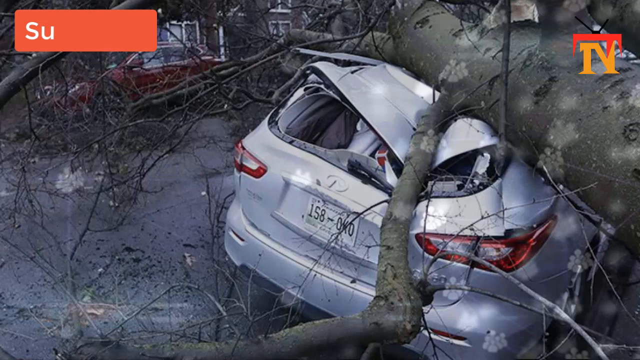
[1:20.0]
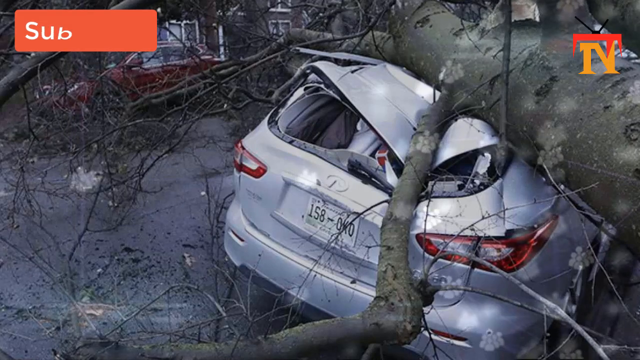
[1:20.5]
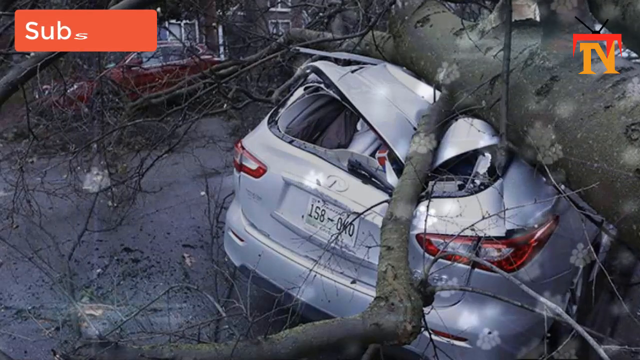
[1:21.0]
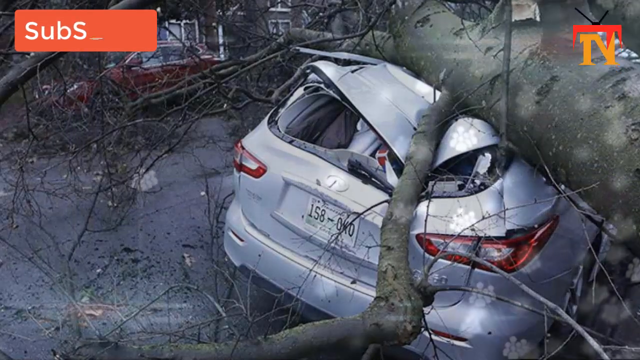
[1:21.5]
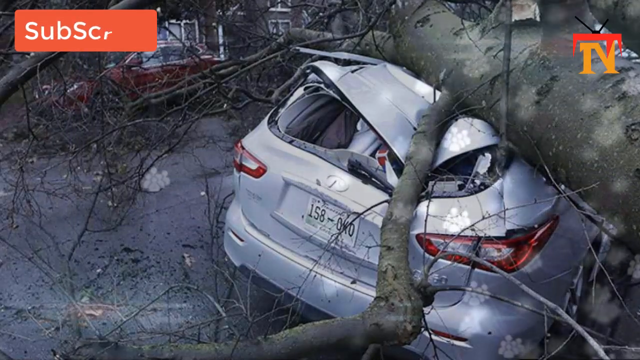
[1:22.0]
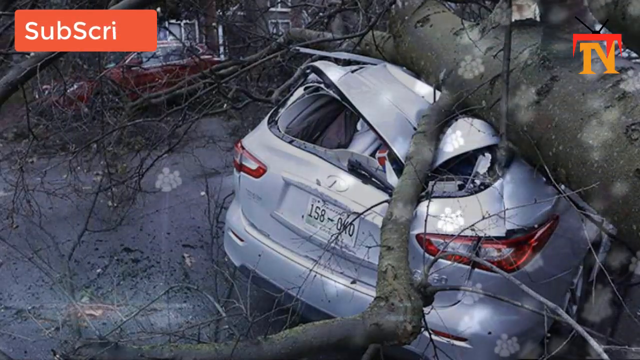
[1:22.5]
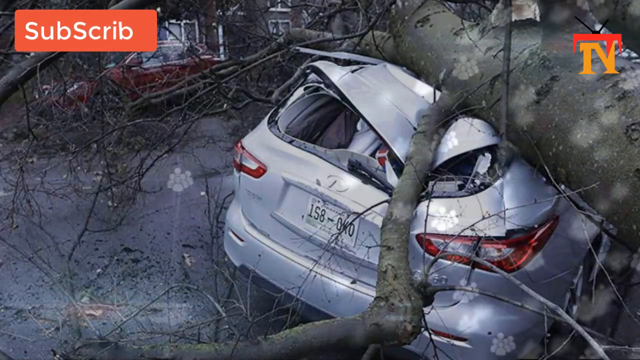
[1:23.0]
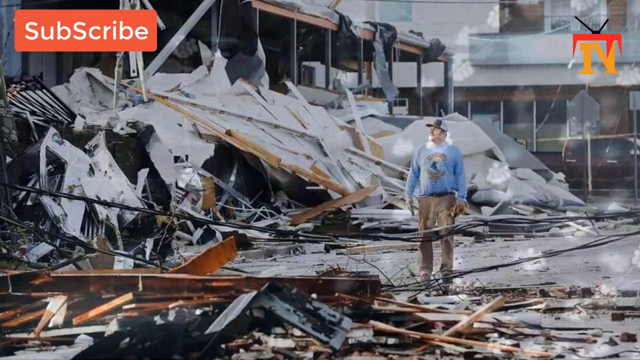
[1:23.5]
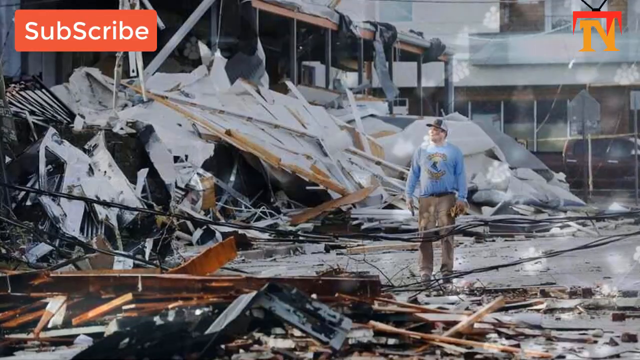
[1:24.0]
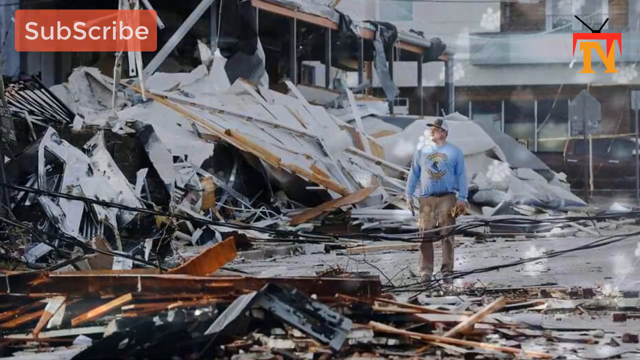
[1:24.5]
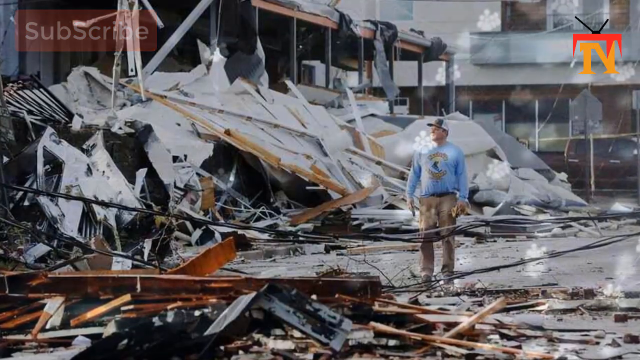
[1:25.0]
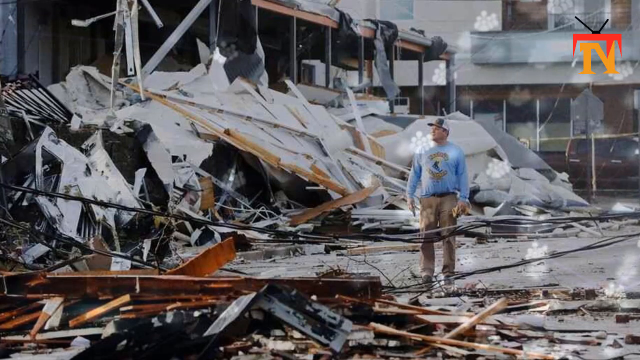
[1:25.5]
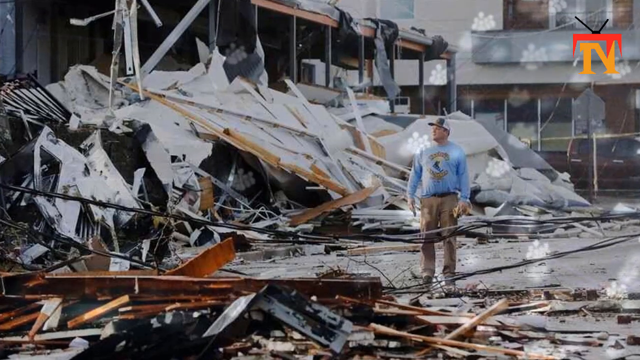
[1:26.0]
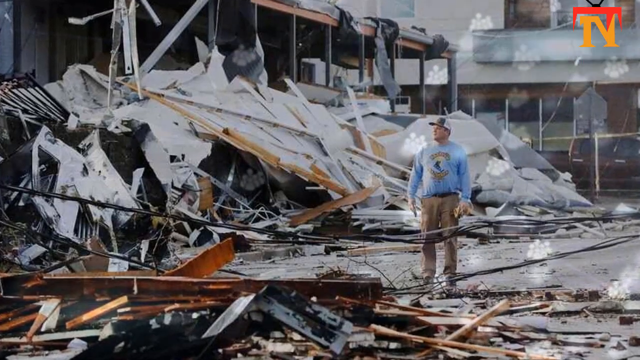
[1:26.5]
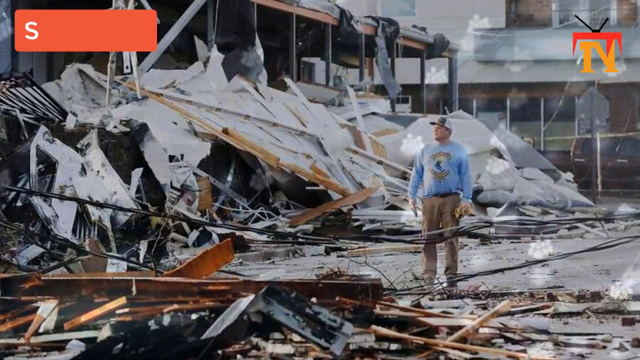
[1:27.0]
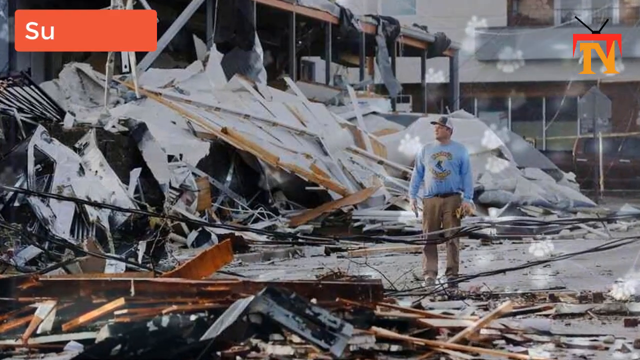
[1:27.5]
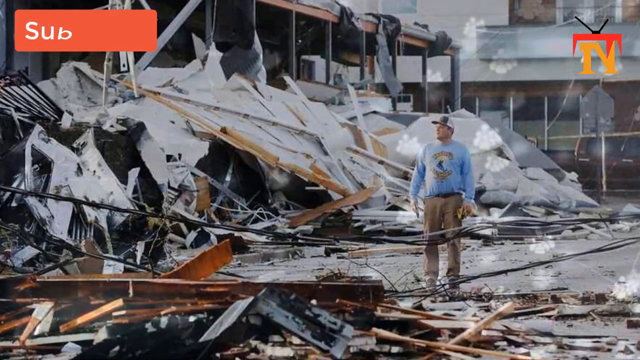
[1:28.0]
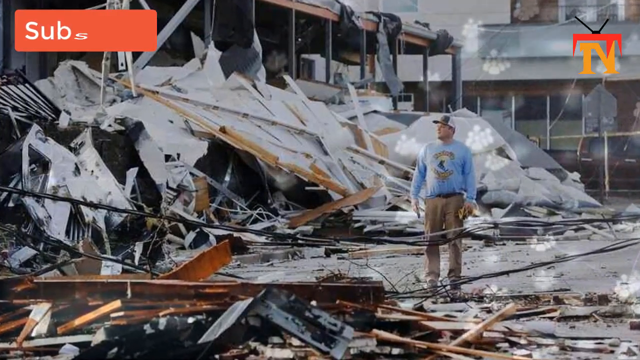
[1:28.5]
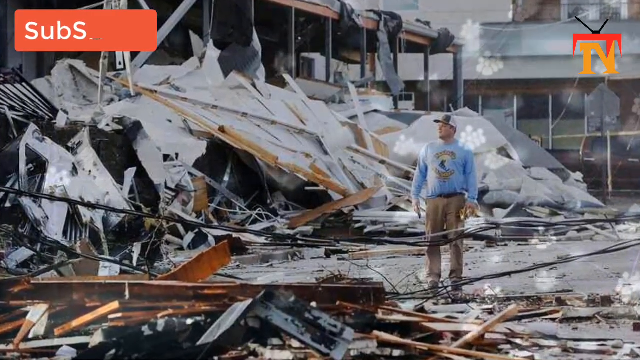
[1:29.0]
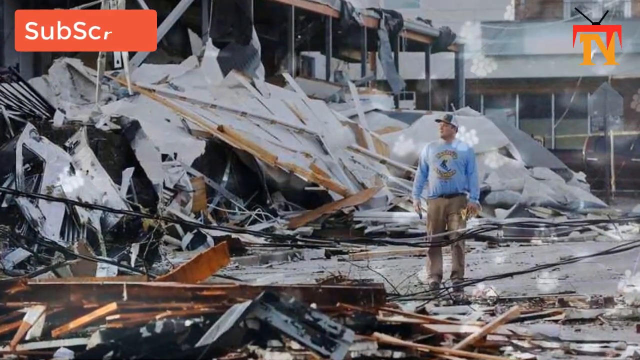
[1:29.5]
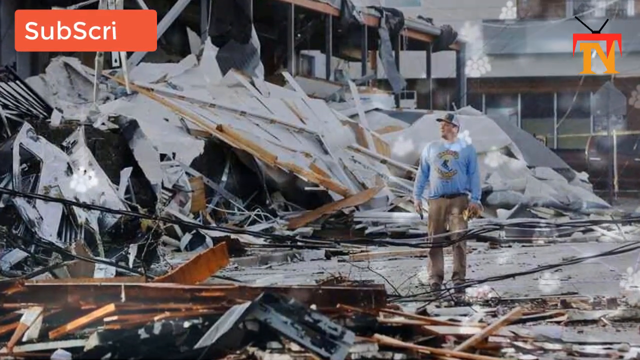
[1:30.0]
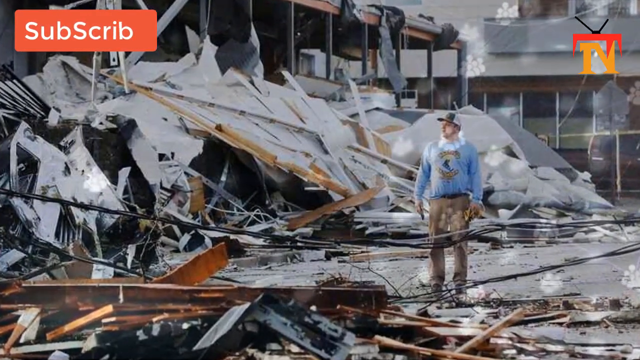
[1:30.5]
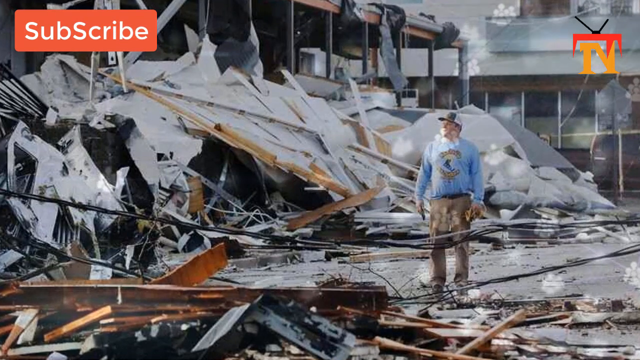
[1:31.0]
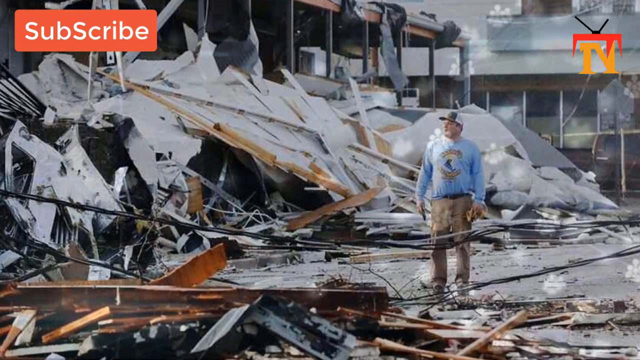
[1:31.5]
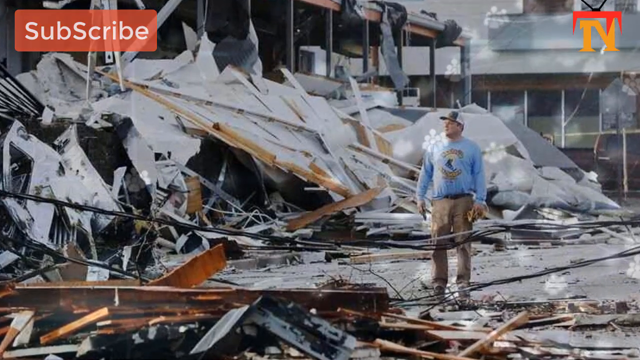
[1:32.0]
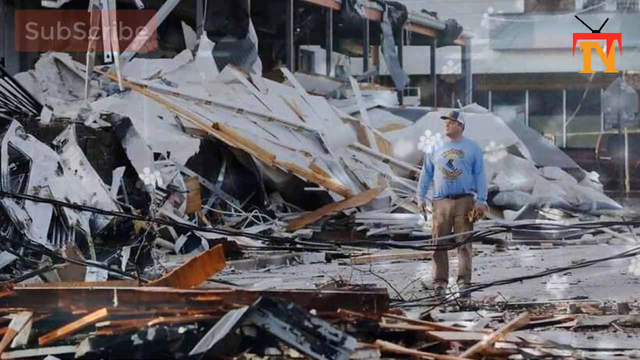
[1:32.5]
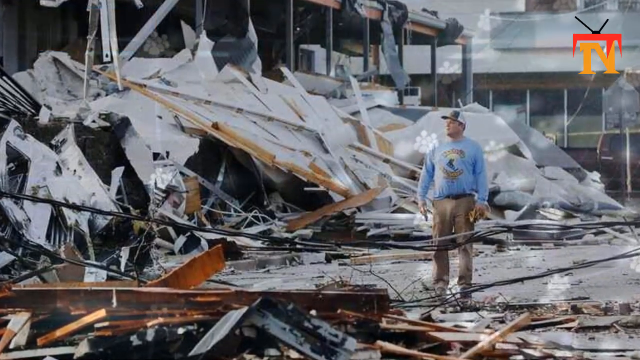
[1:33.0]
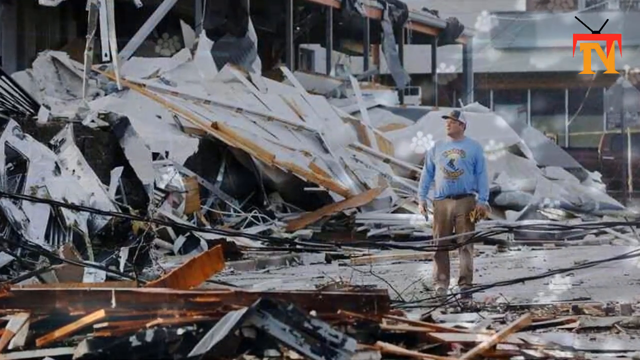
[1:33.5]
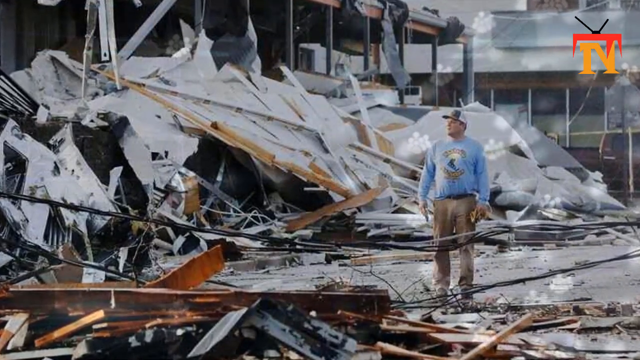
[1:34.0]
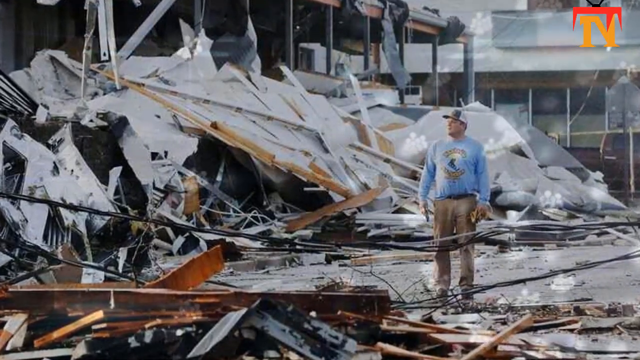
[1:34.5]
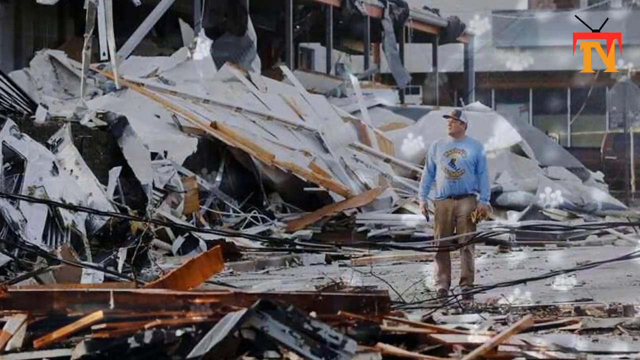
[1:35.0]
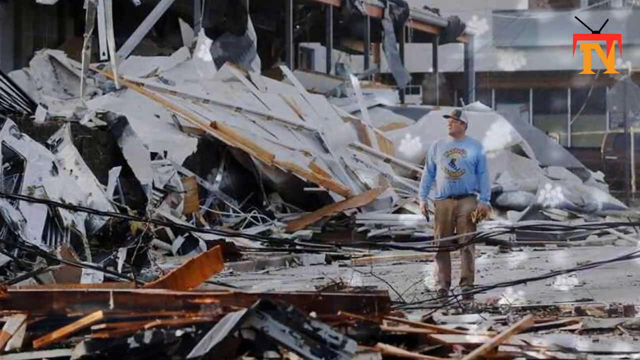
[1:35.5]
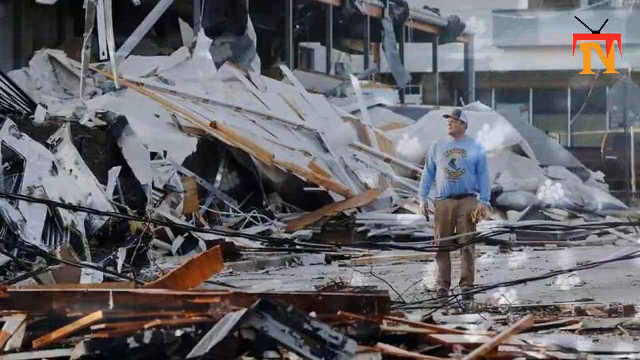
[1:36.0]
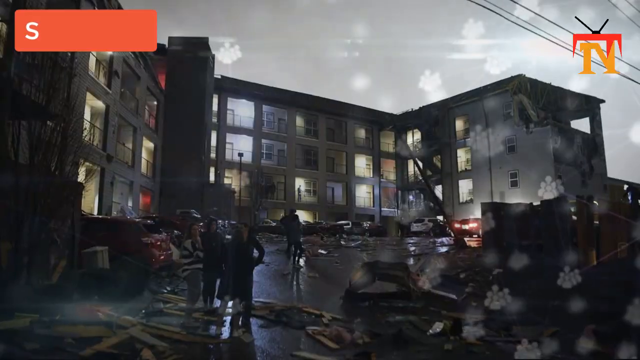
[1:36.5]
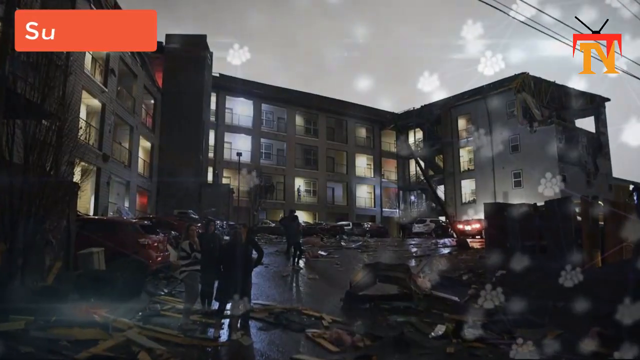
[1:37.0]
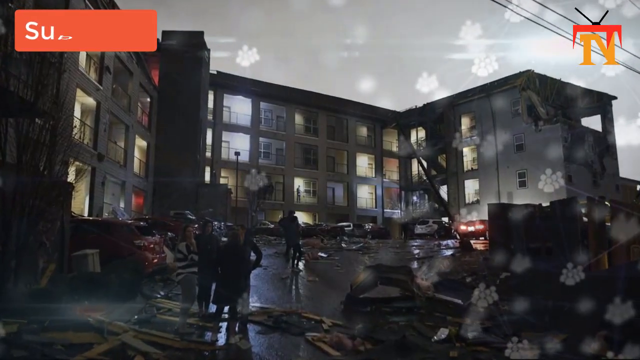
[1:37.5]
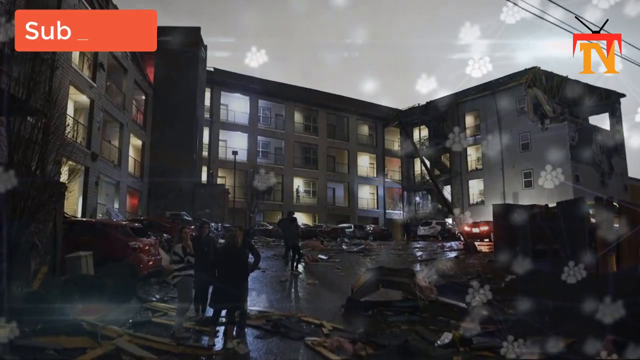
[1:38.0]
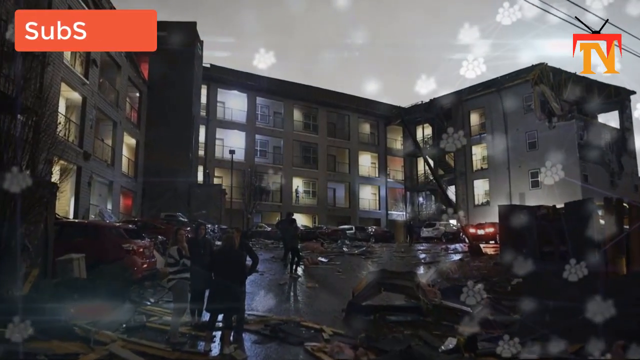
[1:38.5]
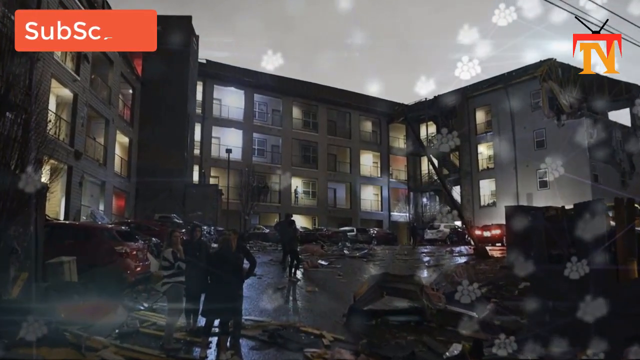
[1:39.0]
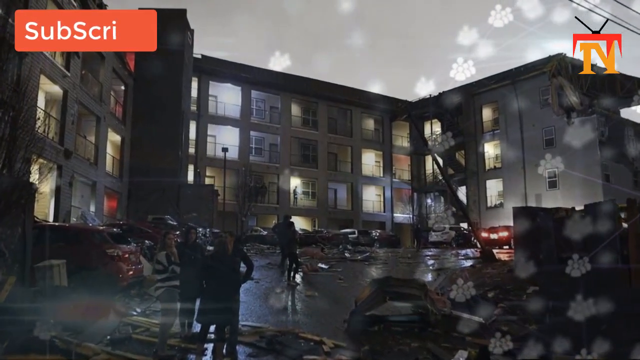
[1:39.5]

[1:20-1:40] A very zoomed-in image shows a large tree that has smashed completely over the top of a silver sedan, breaking the back windows and bending the middle of the roof completely inward. The car is slanted slightly toward the right from the crushing weight of the tree. The scene cuts to a man in a long, loose sweatshirt standing in the center of wreckage. He looks toward the left side of the screen, off into the distance, as if observing the wreckage surrounding him. Behind him are multiple buildings whose facades have been wrecked and lie on the street in giant piles of wreckage. The image slowly zooms in on the destruction. The scene changes to a nighttime view of an apartment building complex, with apparently three people standing outside and wreckage throughout the parking lot.